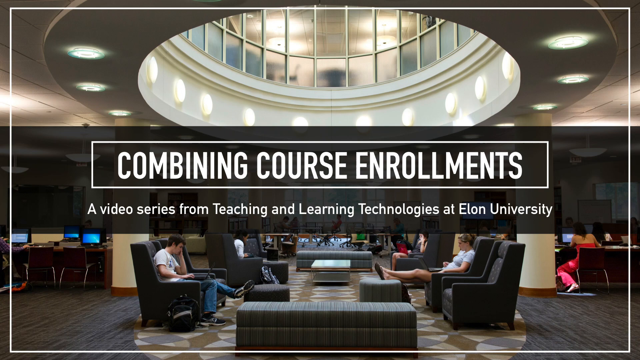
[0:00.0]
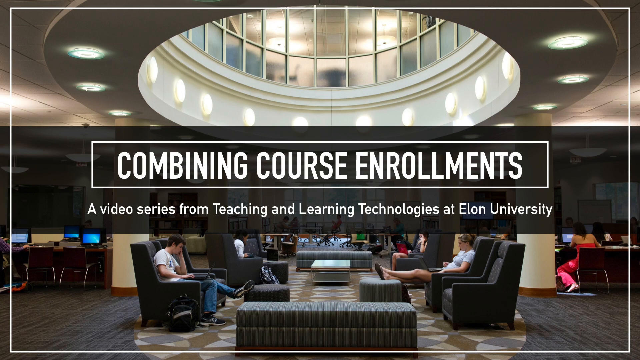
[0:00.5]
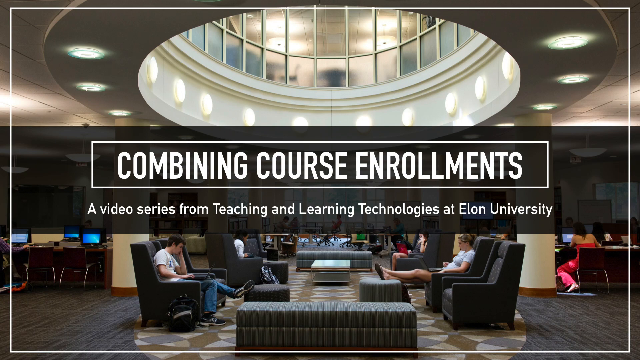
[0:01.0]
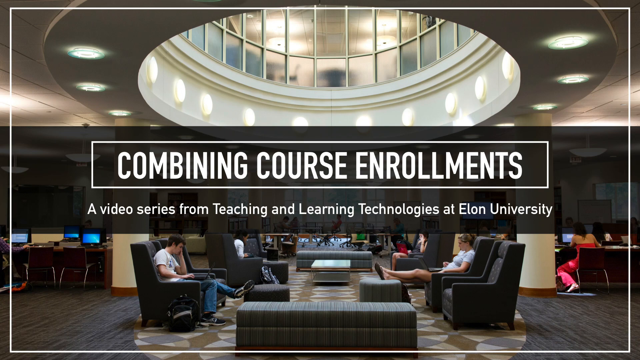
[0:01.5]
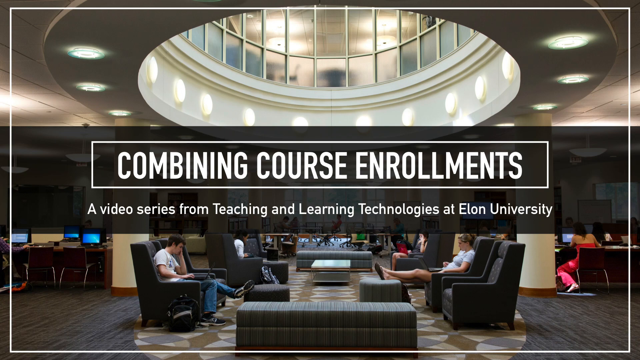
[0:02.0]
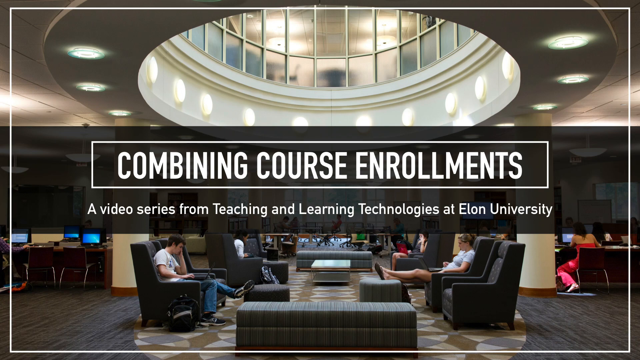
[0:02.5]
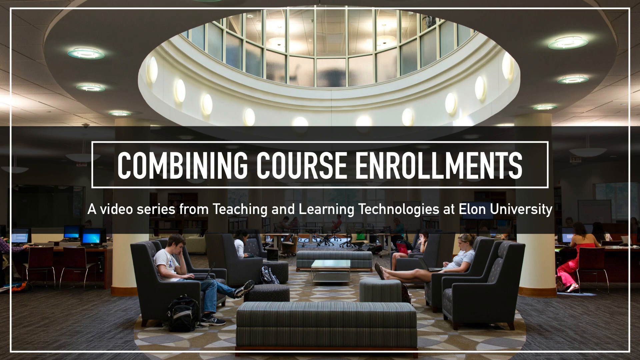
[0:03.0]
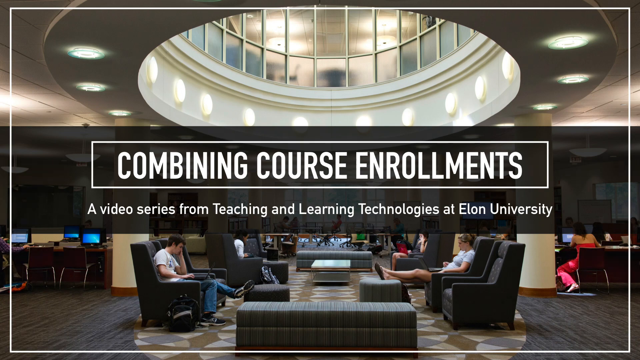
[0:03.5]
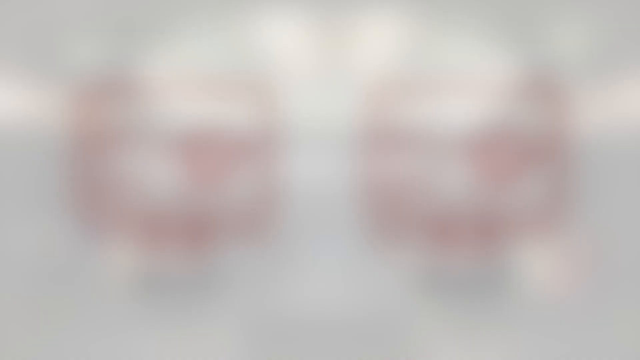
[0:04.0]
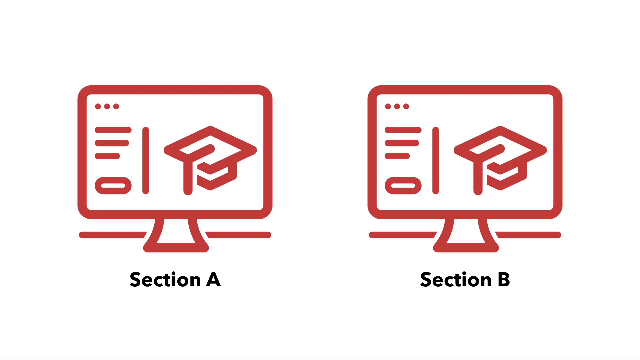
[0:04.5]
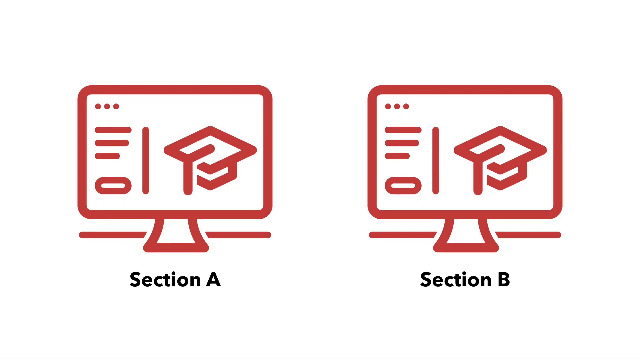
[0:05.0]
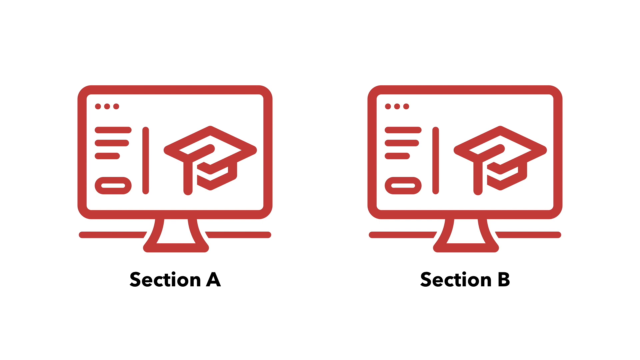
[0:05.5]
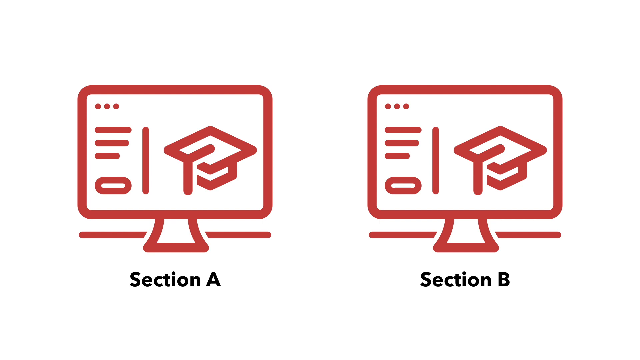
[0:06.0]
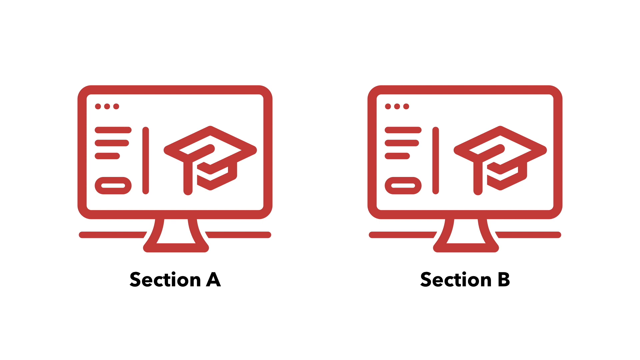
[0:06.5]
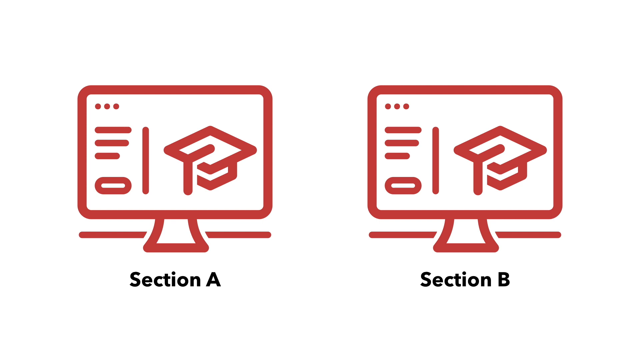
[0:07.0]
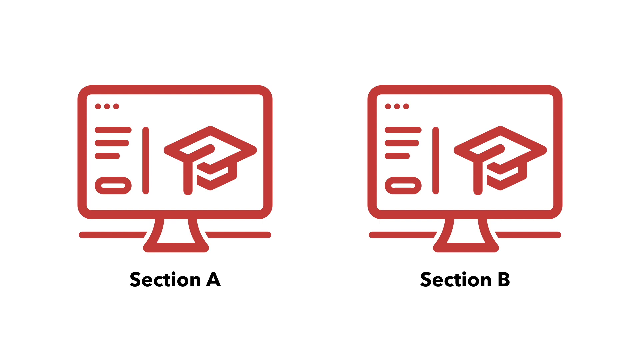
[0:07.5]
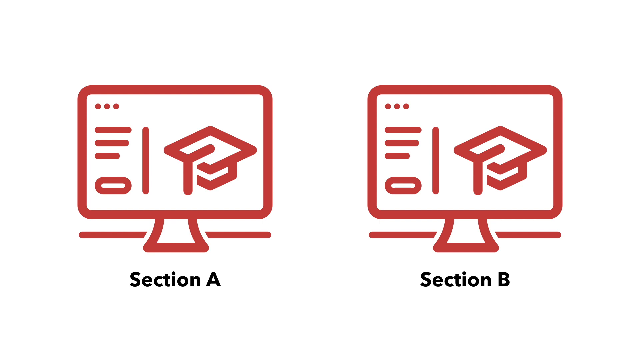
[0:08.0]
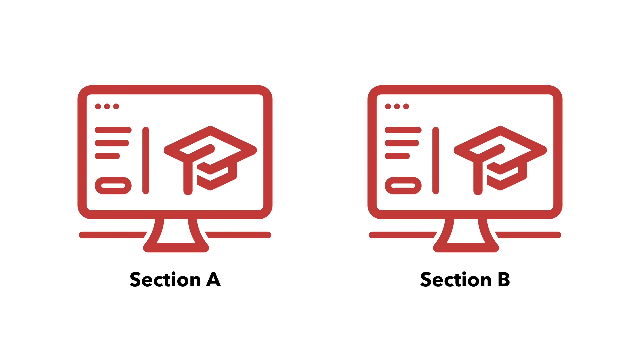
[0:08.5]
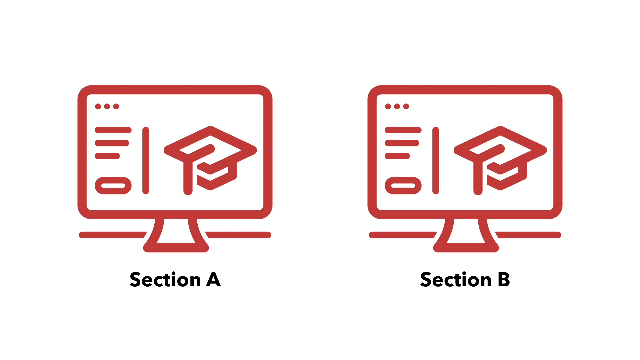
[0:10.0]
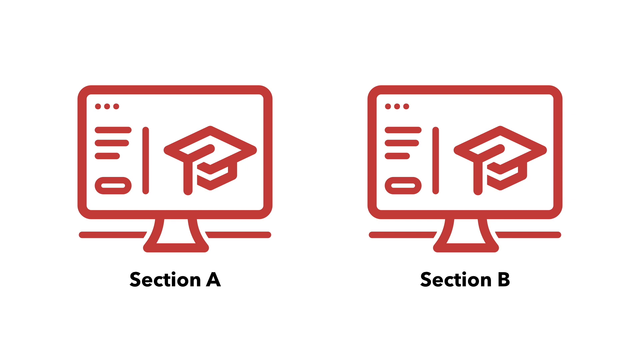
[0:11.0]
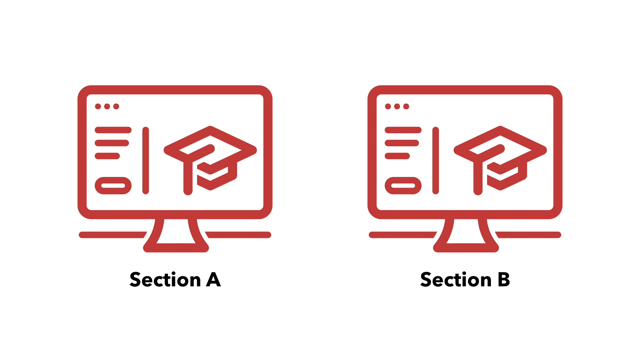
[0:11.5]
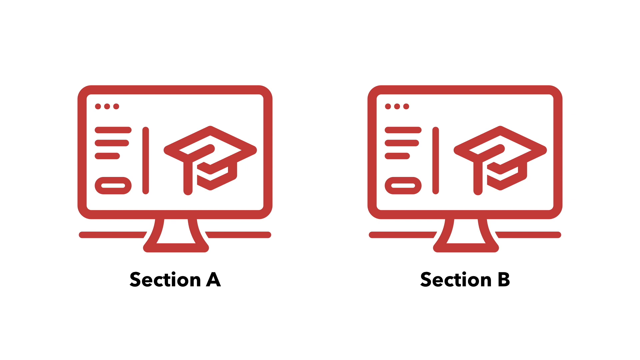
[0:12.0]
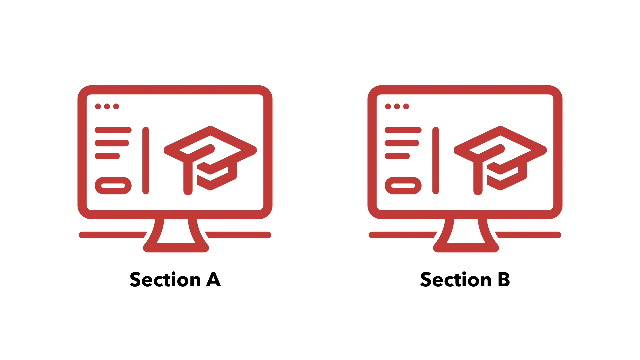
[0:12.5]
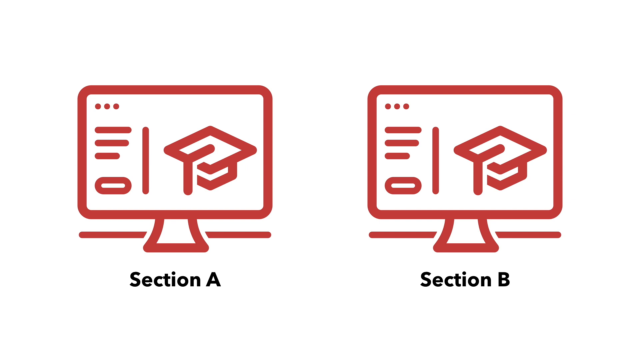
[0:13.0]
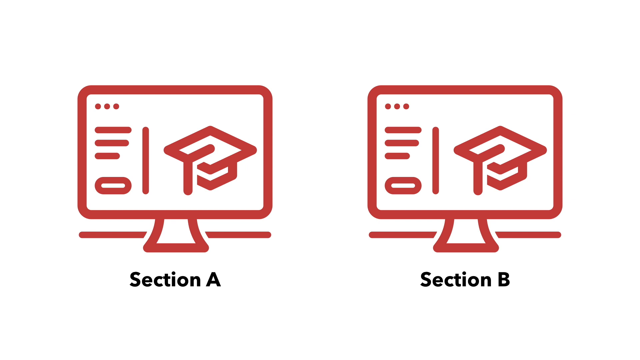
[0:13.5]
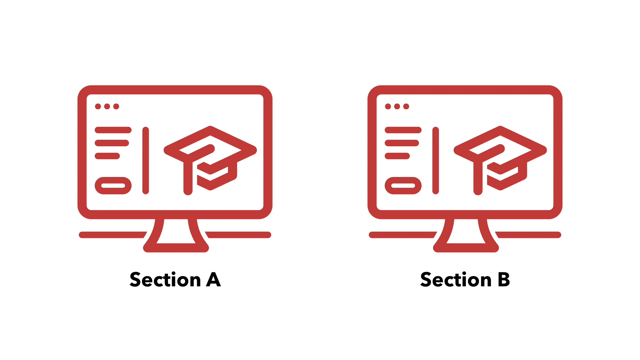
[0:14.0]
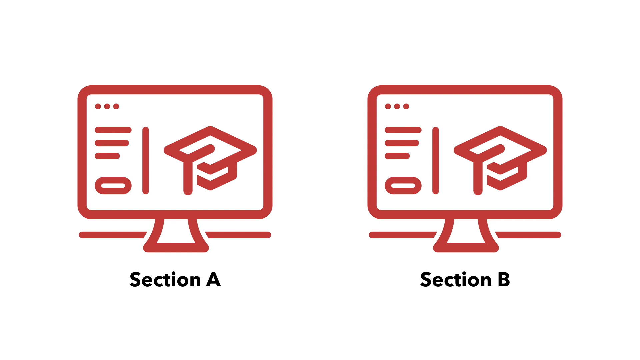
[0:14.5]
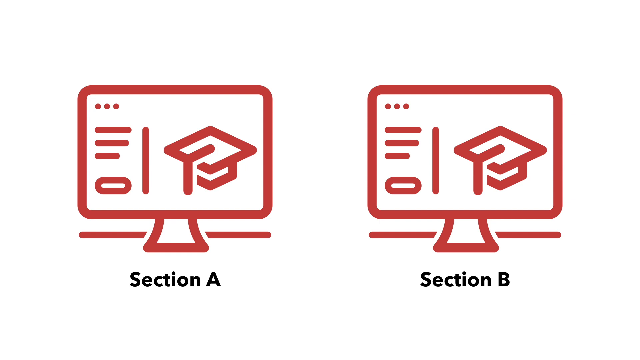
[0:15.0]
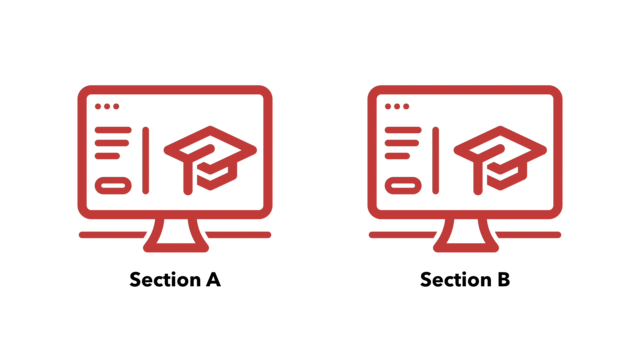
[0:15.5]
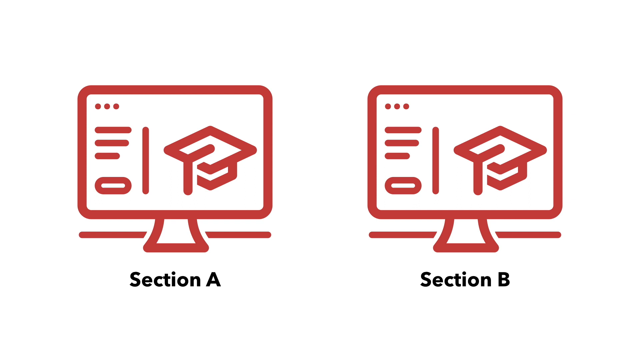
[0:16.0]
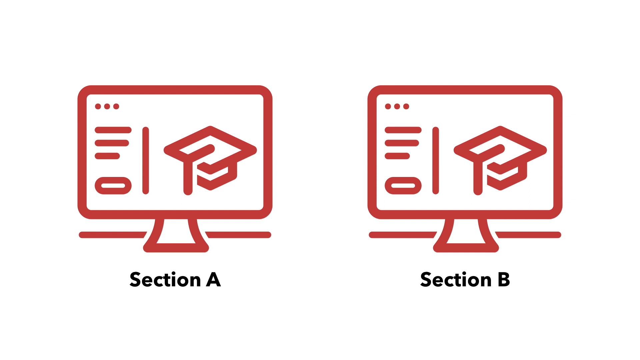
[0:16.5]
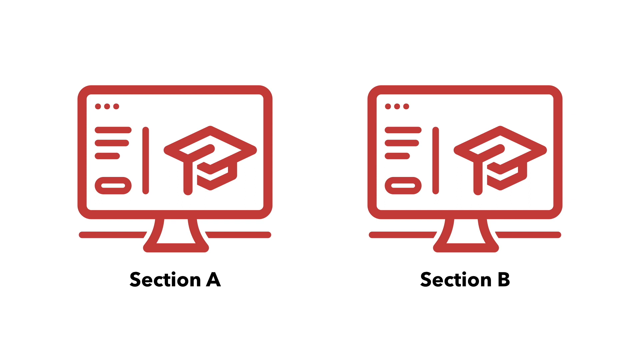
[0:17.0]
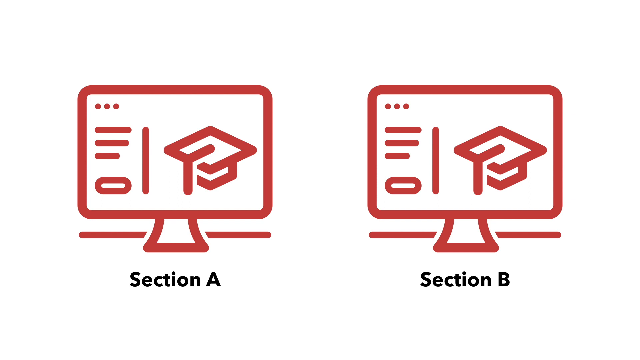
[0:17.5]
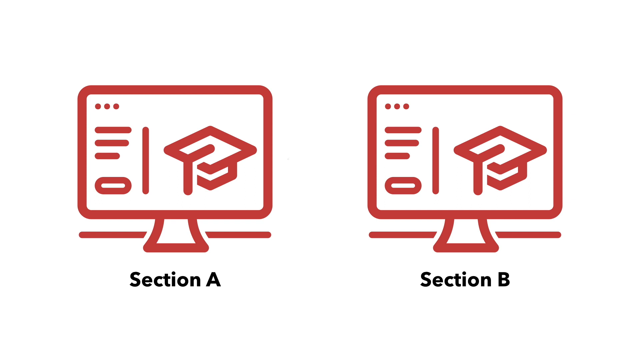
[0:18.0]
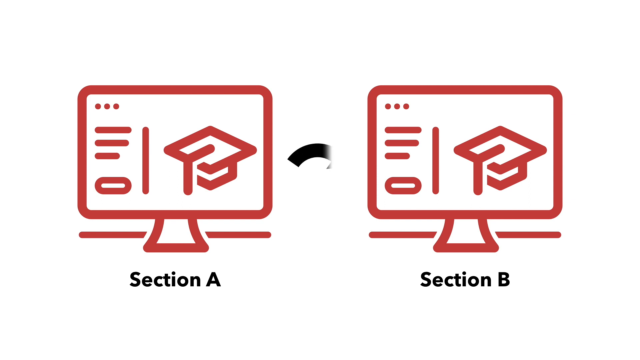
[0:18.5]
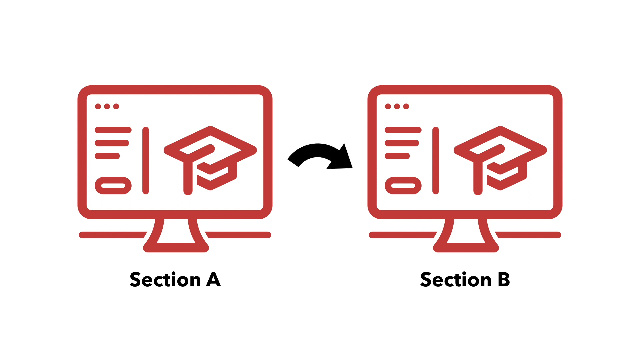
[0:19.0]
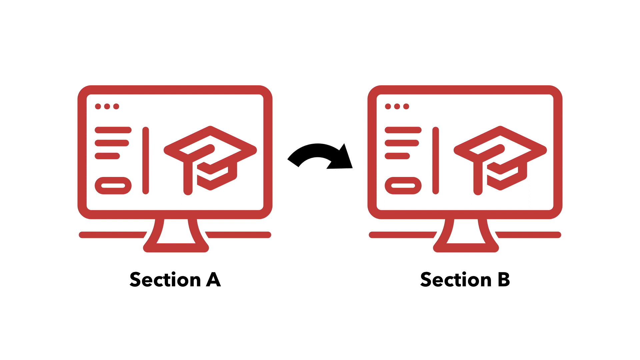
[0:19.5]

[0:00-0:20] This is an educational video. The title reads "combining course enrollments", and underneath it says "a video series on teaching and learning technologies at Elon University". In the background is a large room with a large circular opening in the ceiling for a second floor; it looks like some kind of library, with a seating area in the centre. People sit on laptops, and there are computers on the left and right-hand sides. There is circular lighting at the top, and the room is fairly bright. In the center are tall seats and some carpet. Many people are sitting around studying, and a woman in a red dress is on a computer on the right-hand side. The next scene shows two red computer logos, possibly labeled section A and section B, and on both monitors is a red hat, a graduation or teacher's hat.